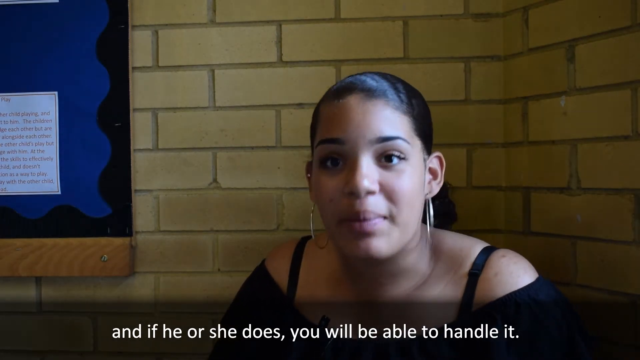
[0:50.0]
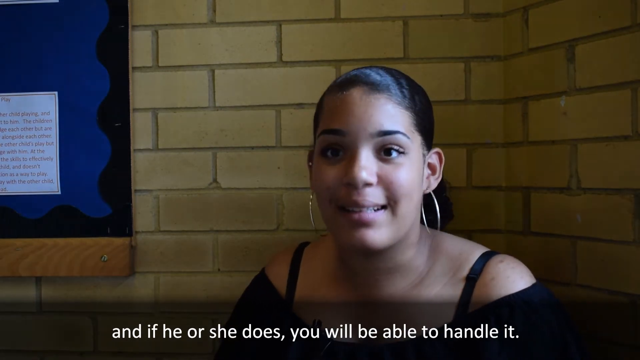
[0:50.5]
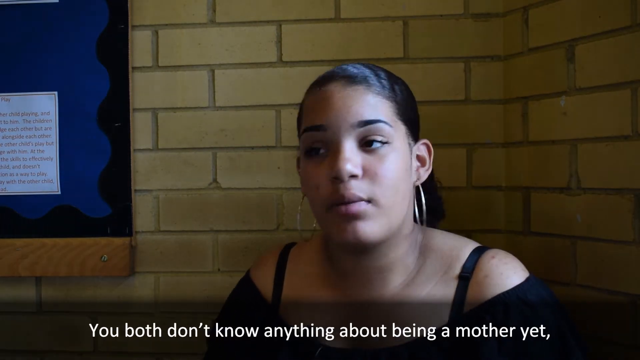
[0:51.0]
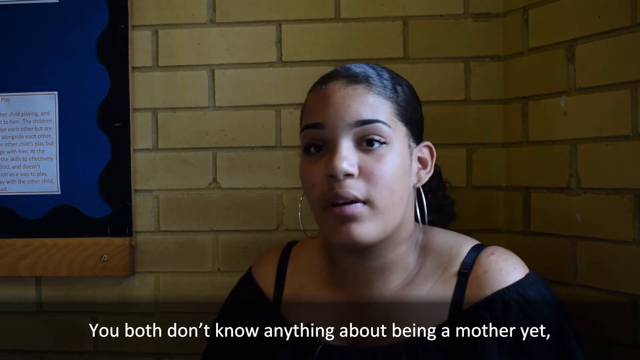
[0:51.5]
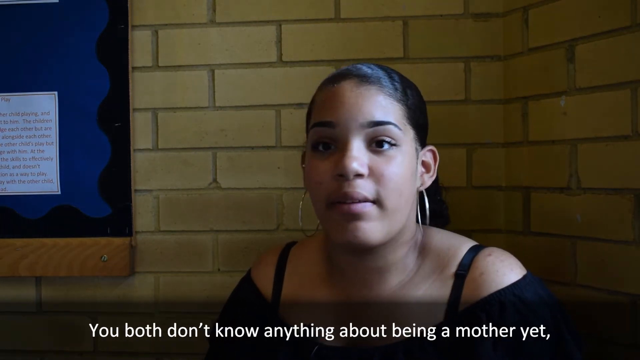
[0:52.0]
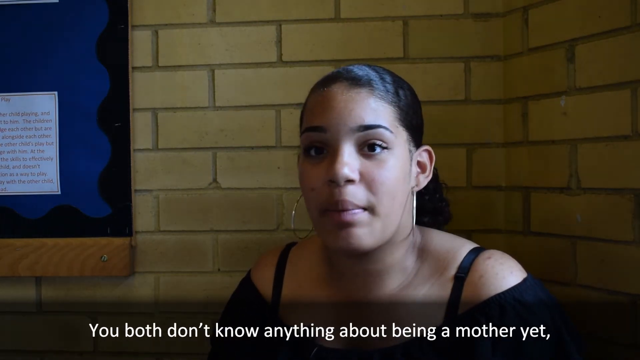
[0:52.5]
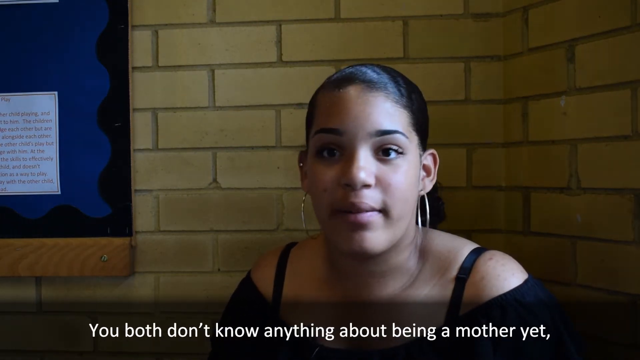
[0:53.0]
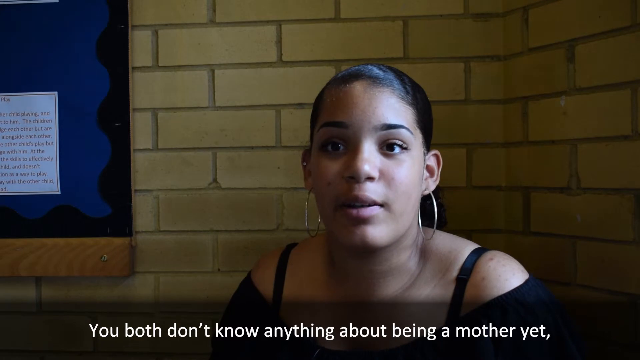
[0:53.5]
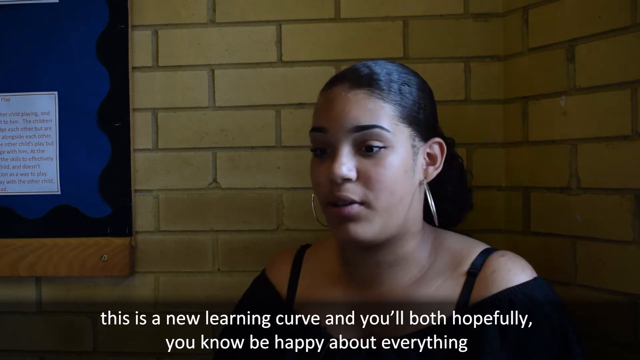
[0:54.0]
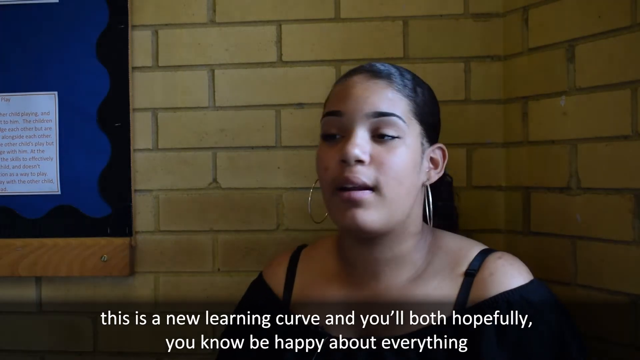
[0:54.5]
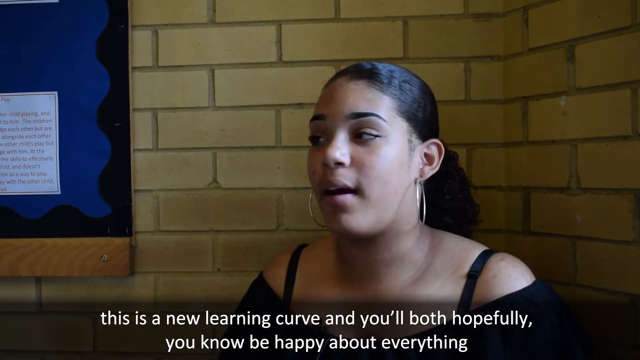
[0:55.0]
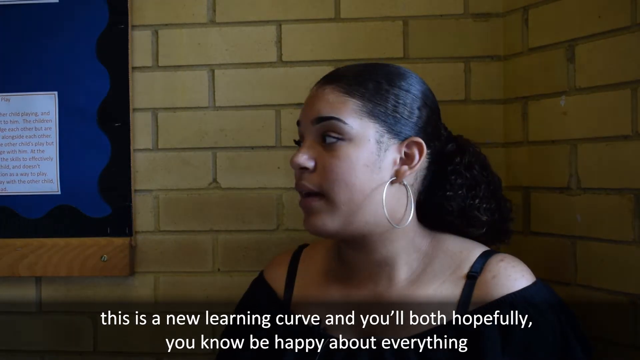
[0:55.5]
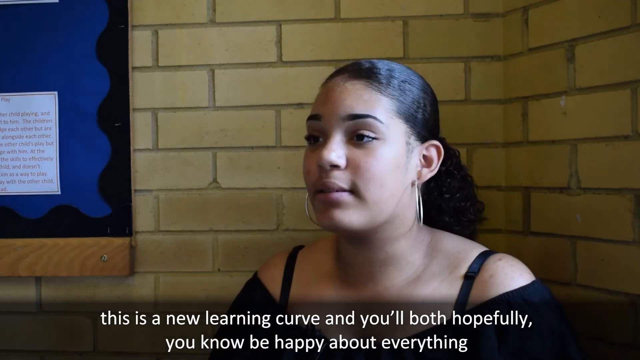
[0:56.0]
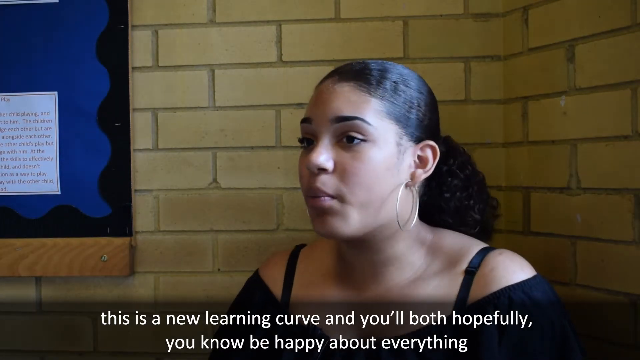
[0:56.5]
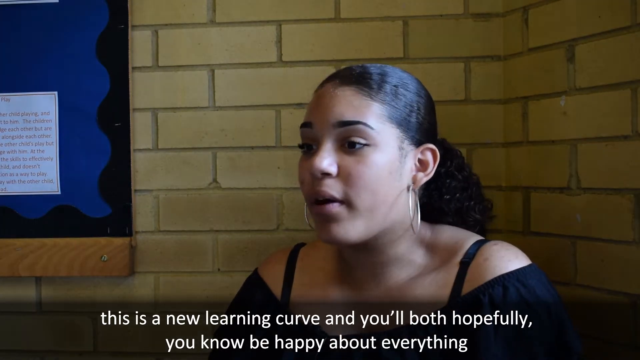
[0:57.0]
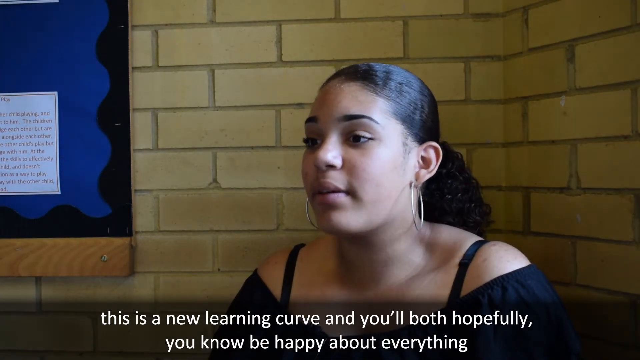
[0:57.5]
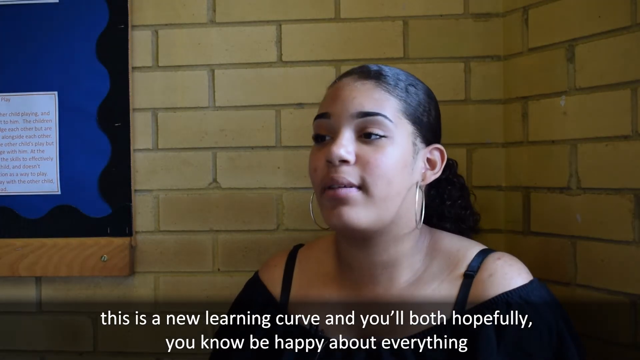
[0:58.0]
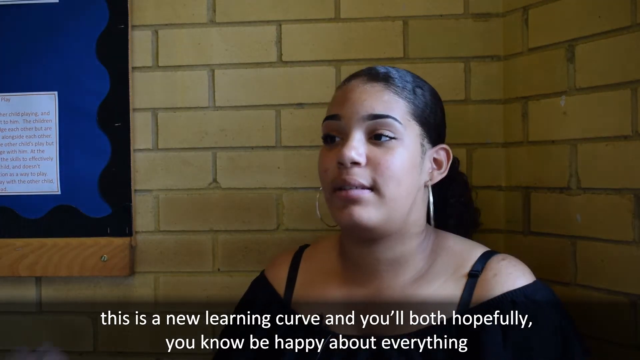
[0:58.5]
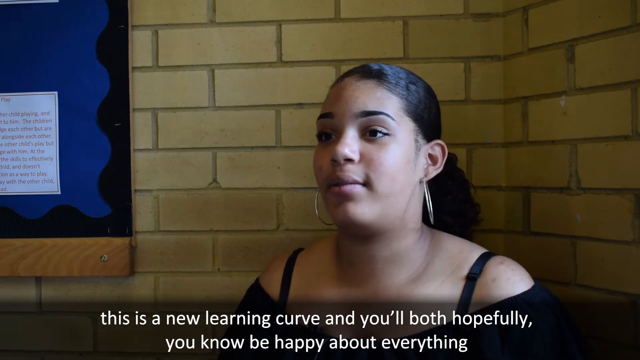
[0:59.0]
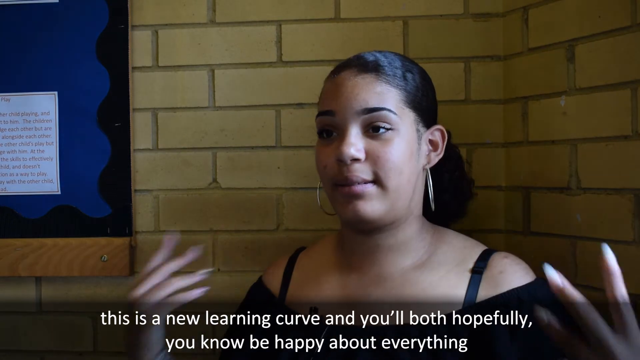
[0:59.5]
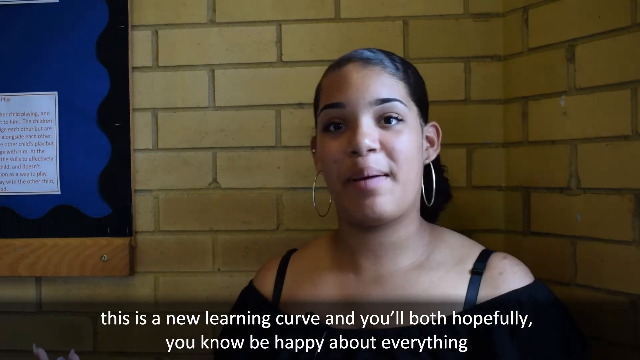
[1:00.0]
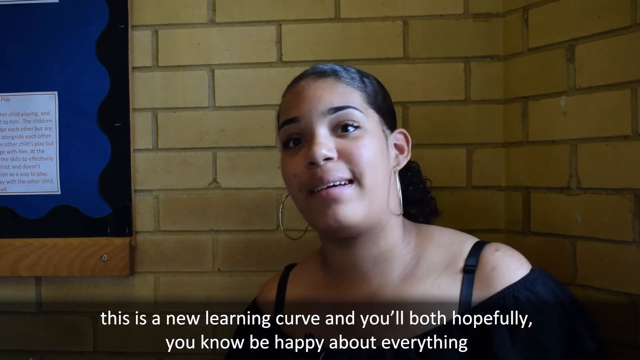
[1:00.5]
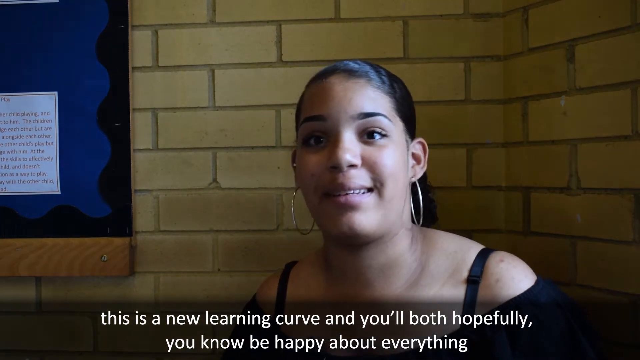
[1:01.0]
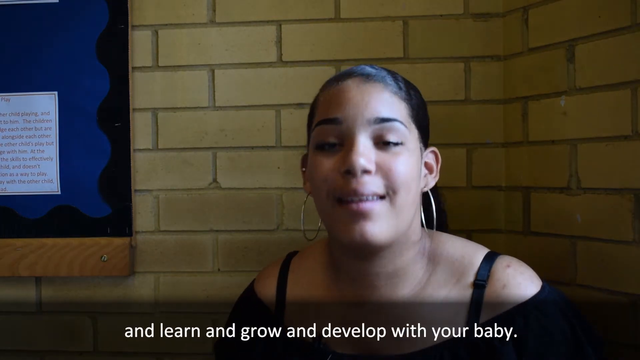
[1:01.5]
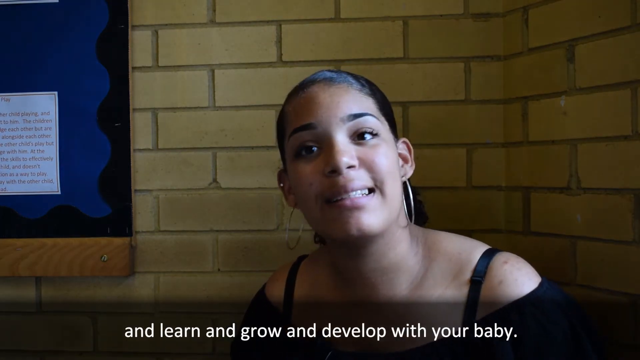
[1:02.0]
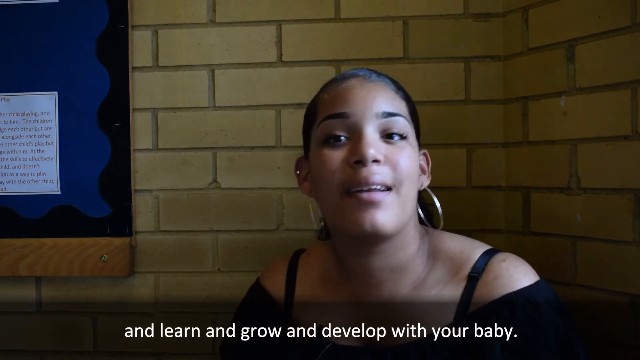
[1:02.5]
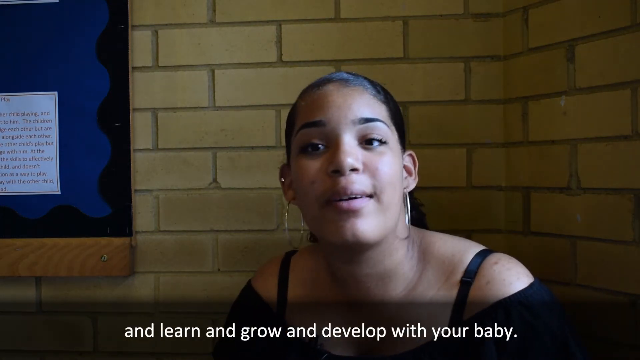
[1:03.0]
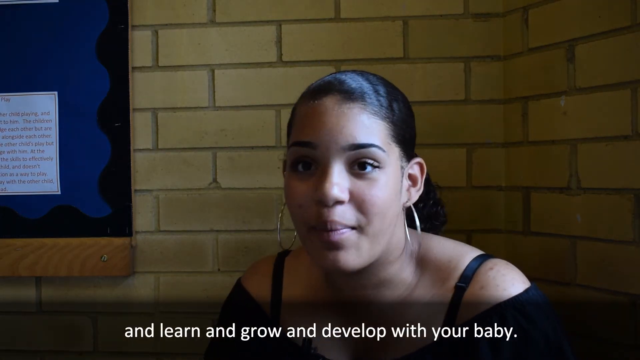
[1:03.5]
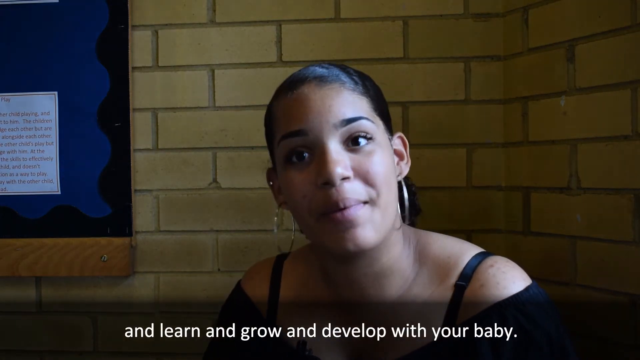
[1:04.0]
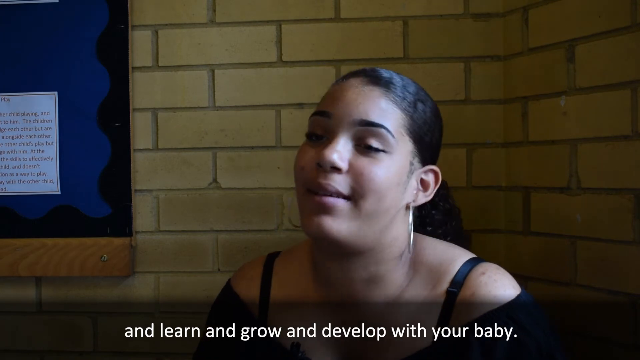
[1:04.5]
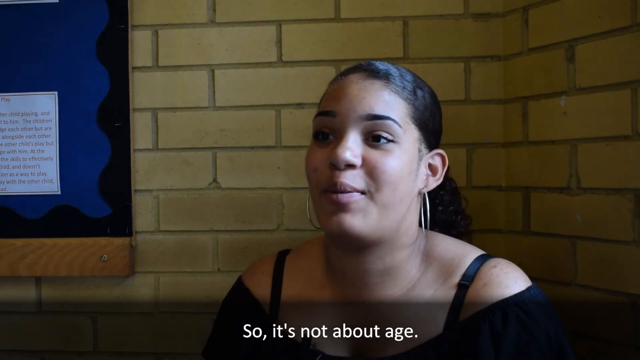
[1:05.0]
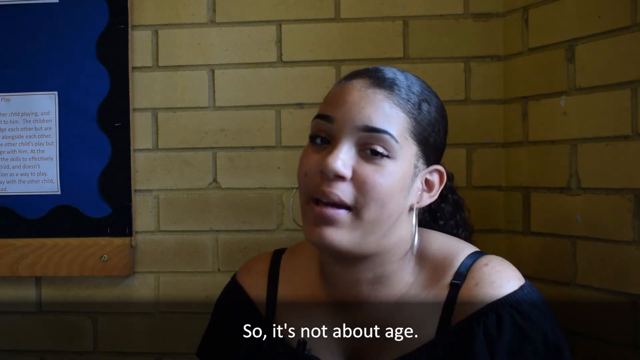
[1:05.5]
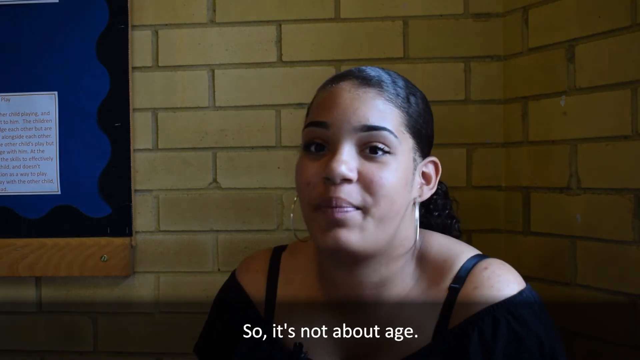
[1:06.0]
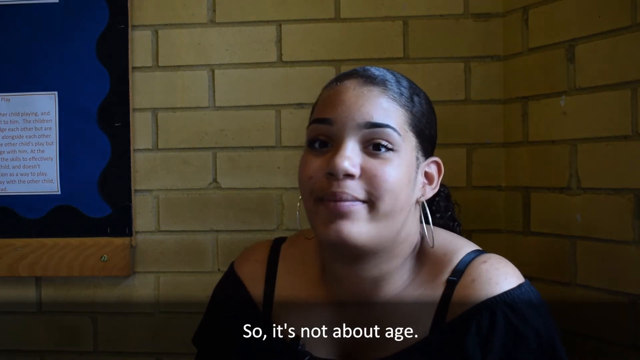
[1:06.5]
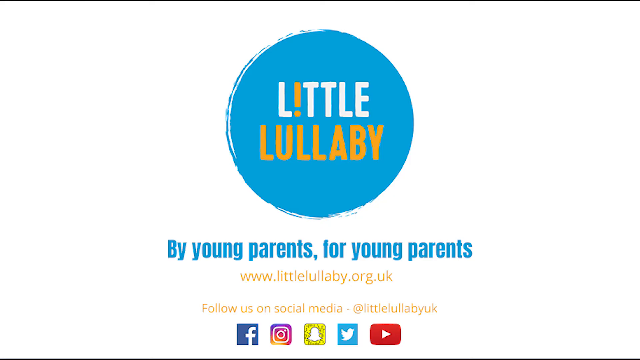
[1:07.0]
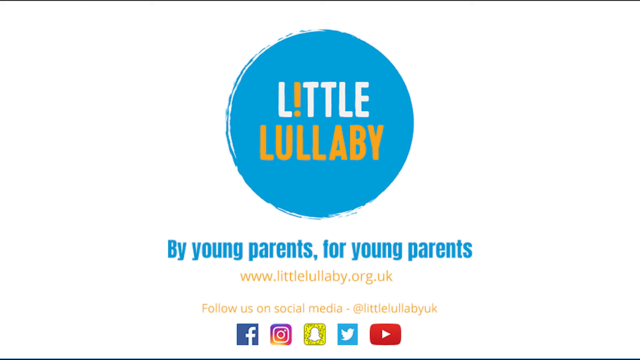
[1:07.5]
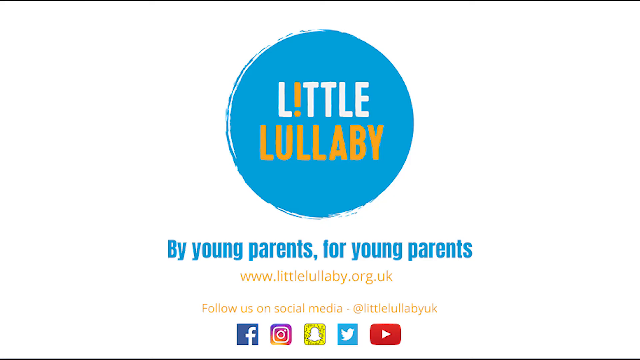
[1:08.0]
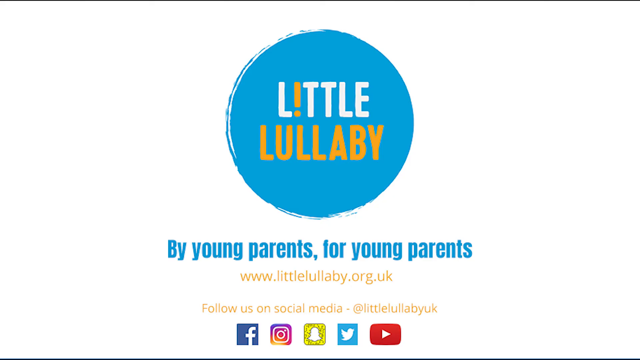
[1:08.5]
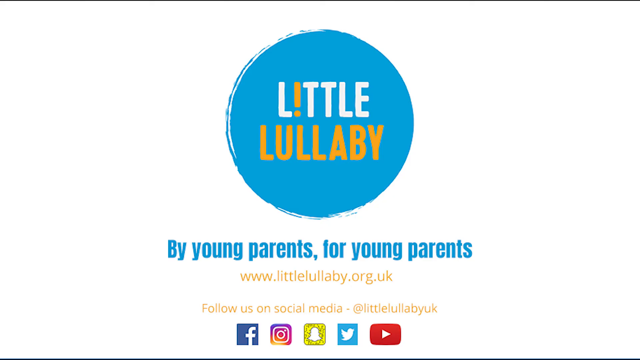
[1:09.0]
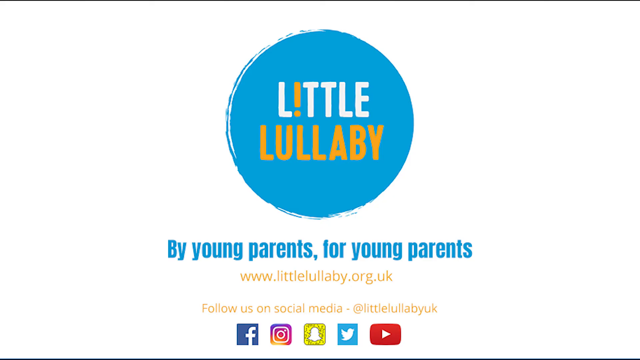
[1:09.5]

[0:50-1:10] She shifts and slightly averts her gaze, then waves both hands in an outward gesture for emphasis. The screen fades to a white screen with a blue circle in the center that reads "little lullaby" in white and orange text. Beneath the circle is the caption "by young parents for young parents" in blue text, and beneath that is a UK website address for littlelullaby.org. Below this is a prompt to follow Little Lullaby on social media, with Facebook, Instagram, Snapchat, Twitter, and YouTube icons. This is the outro screen, and the video appears to be simply a short interview or presentation by a mother.